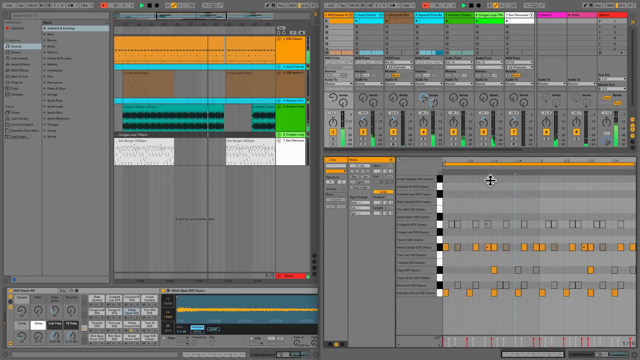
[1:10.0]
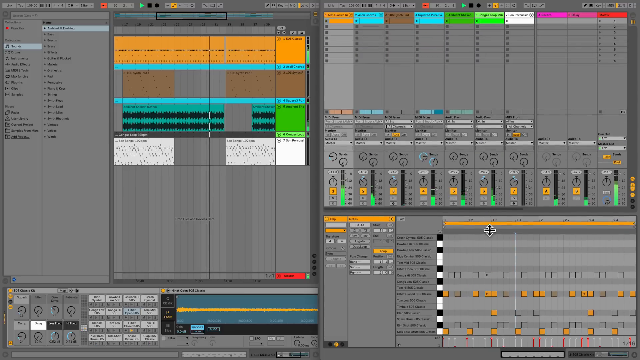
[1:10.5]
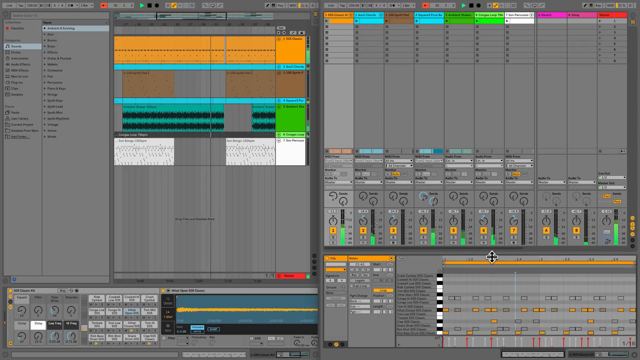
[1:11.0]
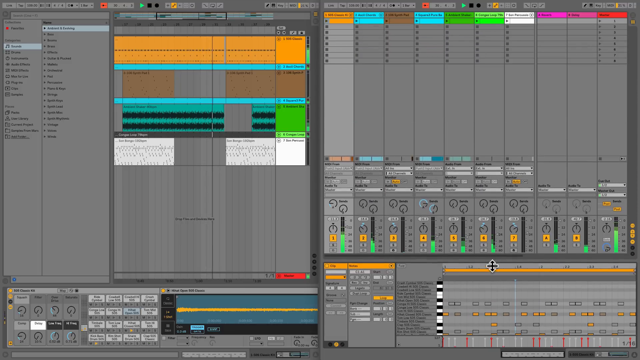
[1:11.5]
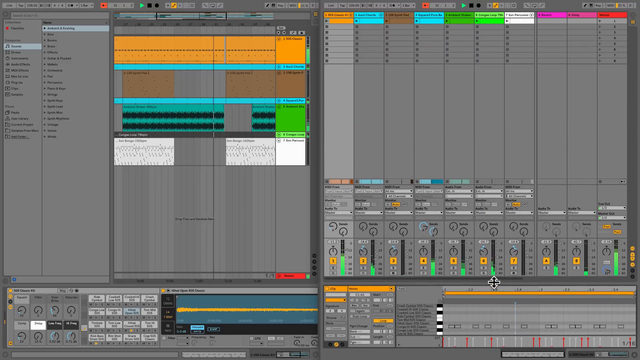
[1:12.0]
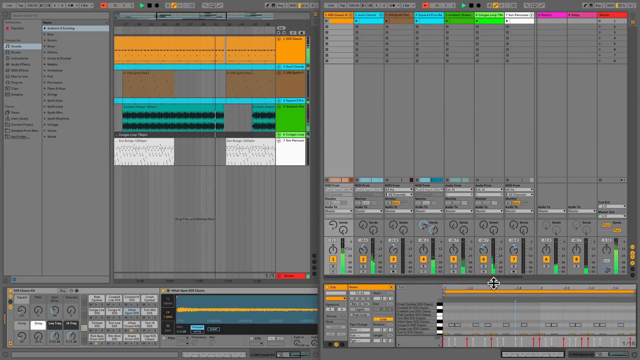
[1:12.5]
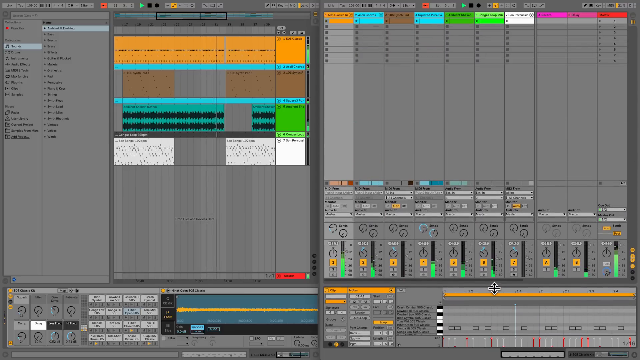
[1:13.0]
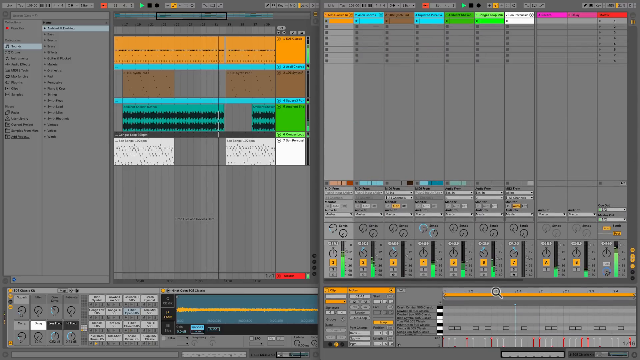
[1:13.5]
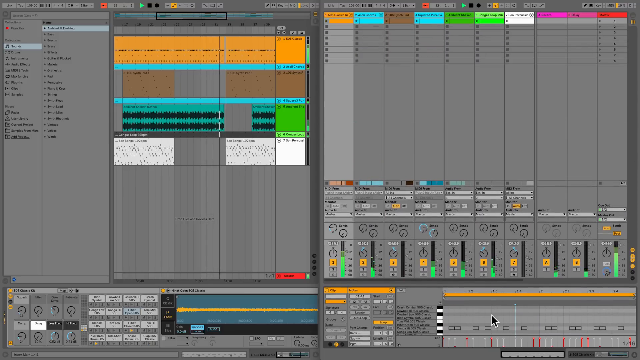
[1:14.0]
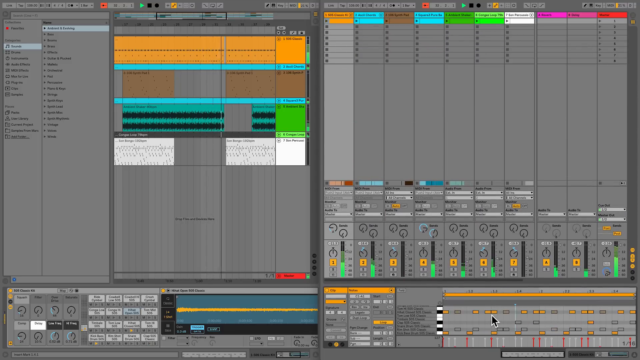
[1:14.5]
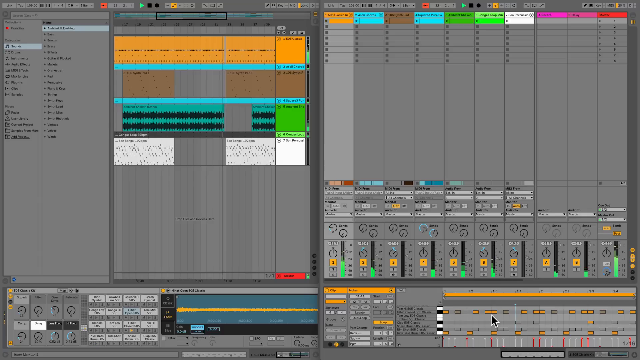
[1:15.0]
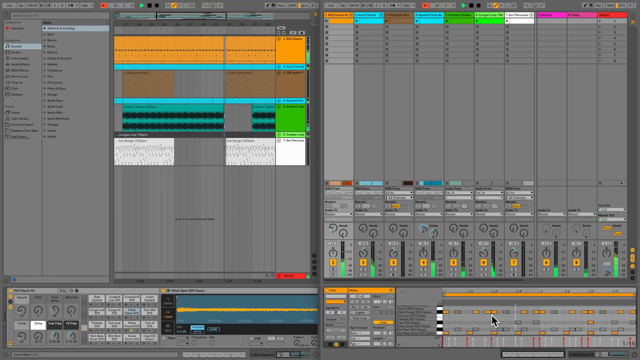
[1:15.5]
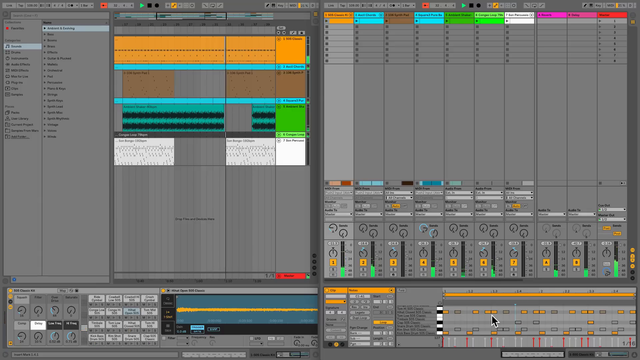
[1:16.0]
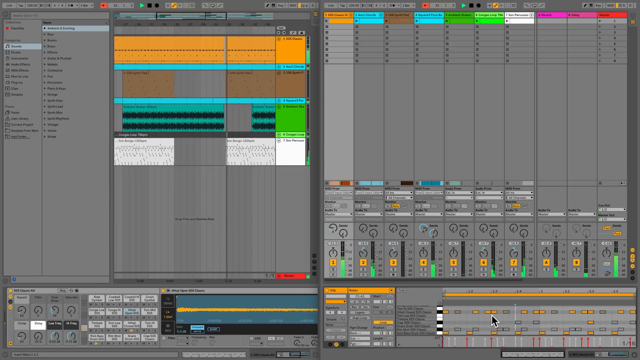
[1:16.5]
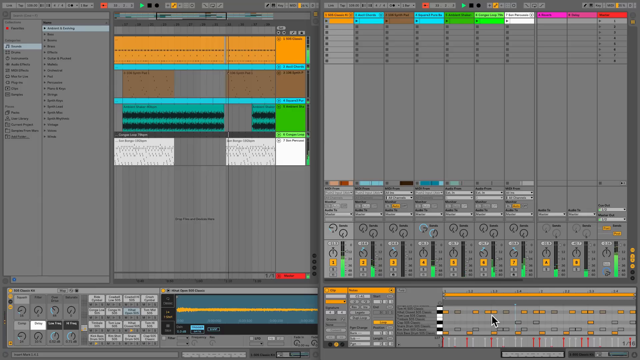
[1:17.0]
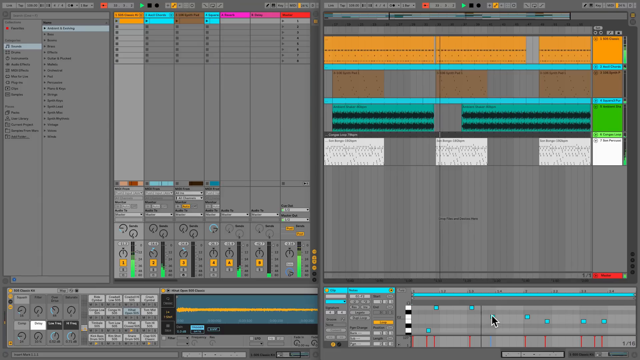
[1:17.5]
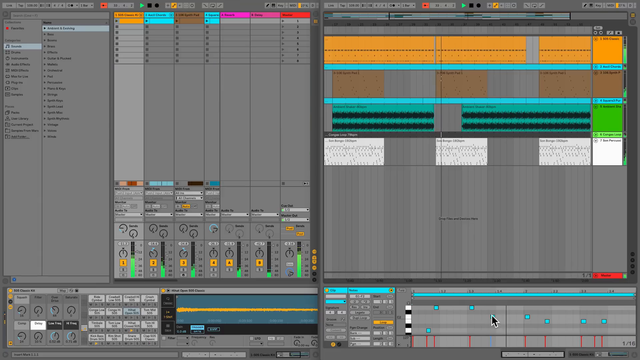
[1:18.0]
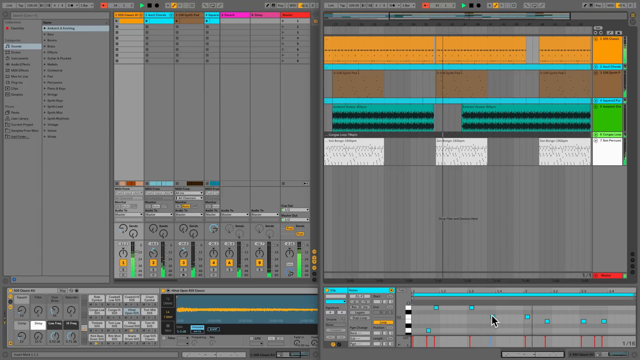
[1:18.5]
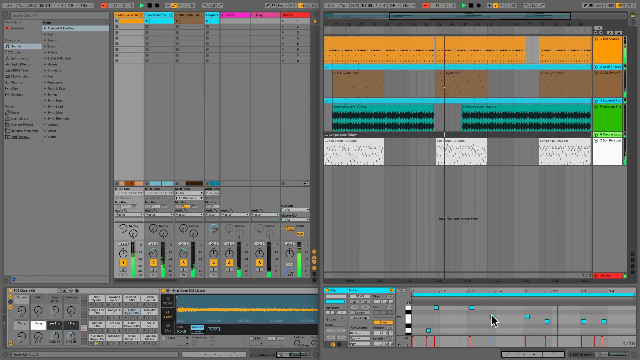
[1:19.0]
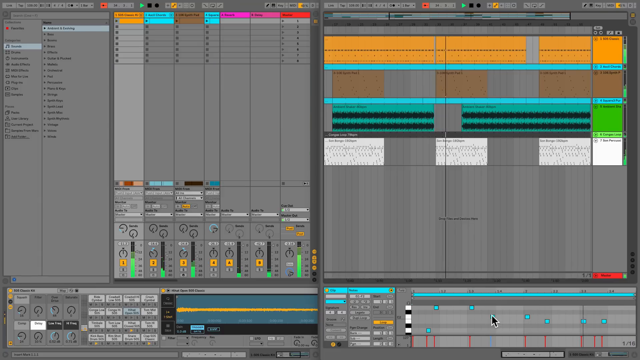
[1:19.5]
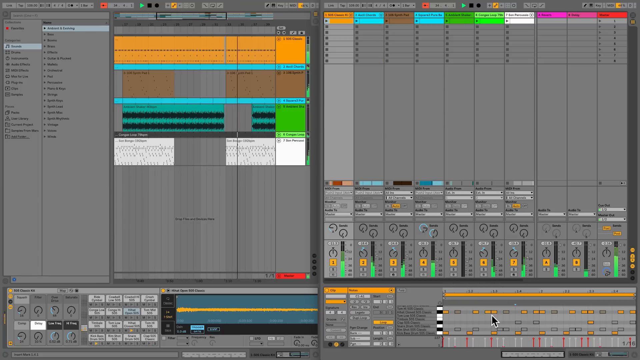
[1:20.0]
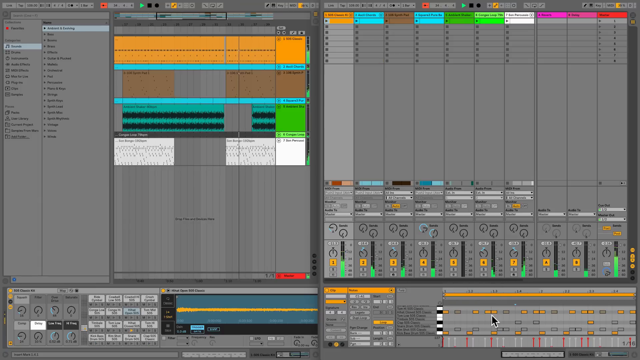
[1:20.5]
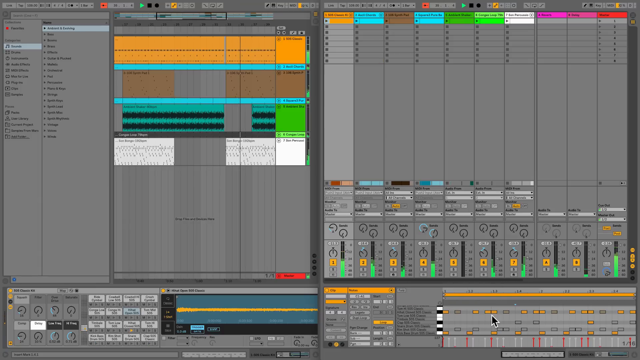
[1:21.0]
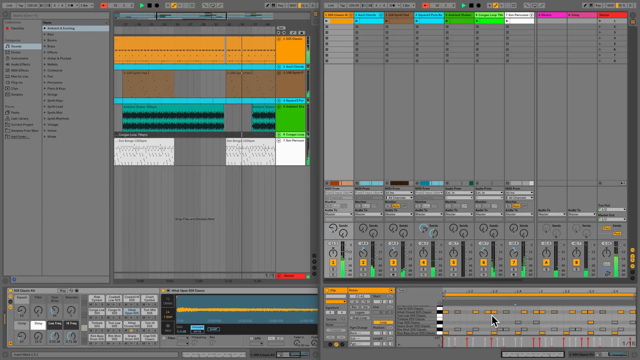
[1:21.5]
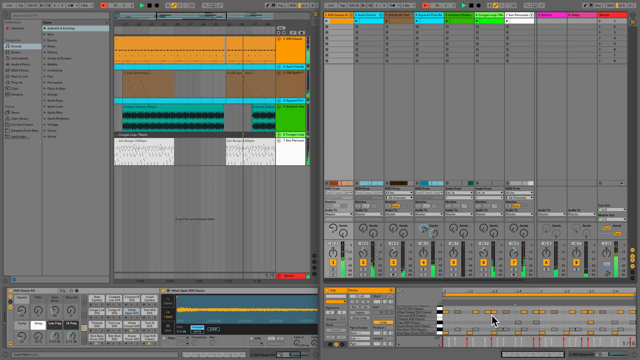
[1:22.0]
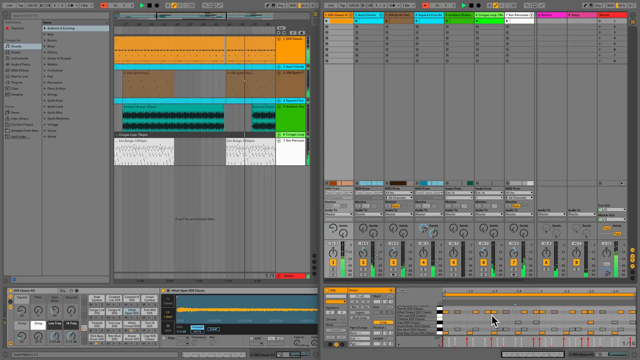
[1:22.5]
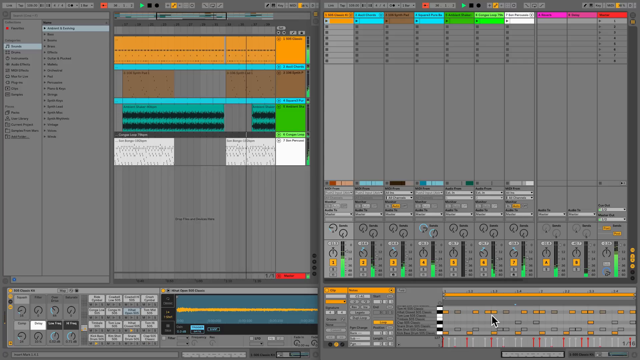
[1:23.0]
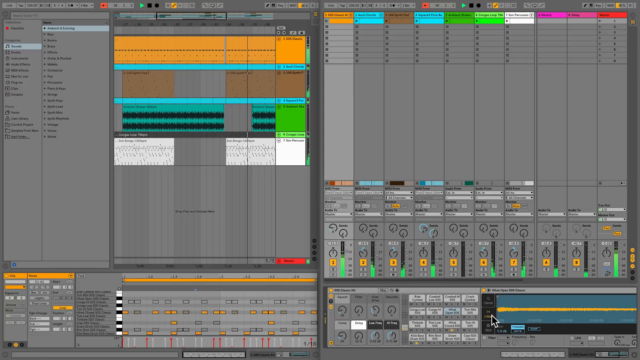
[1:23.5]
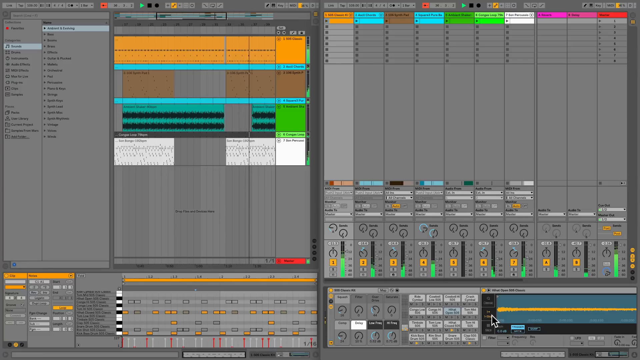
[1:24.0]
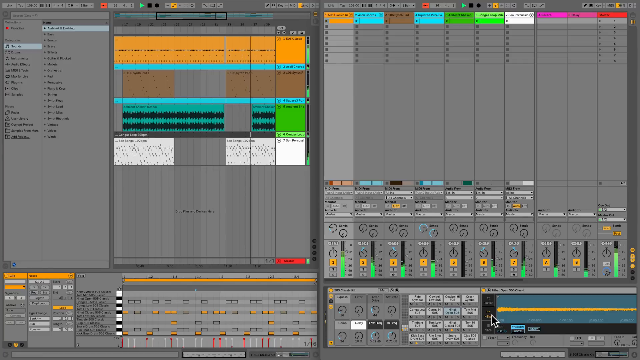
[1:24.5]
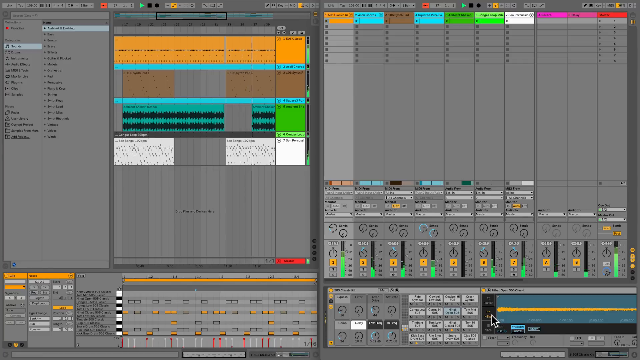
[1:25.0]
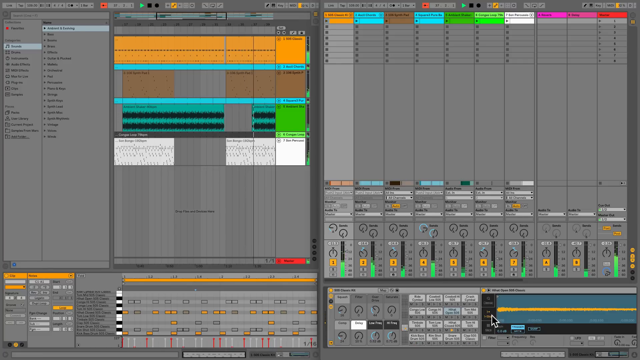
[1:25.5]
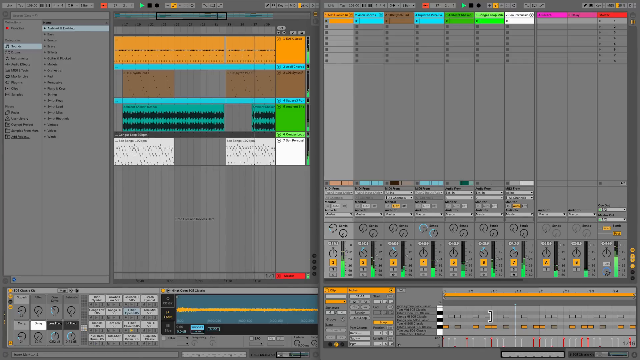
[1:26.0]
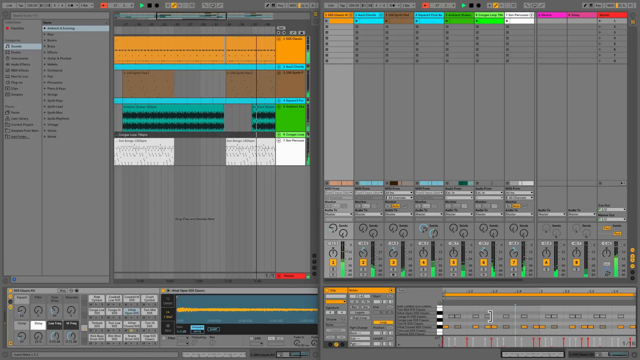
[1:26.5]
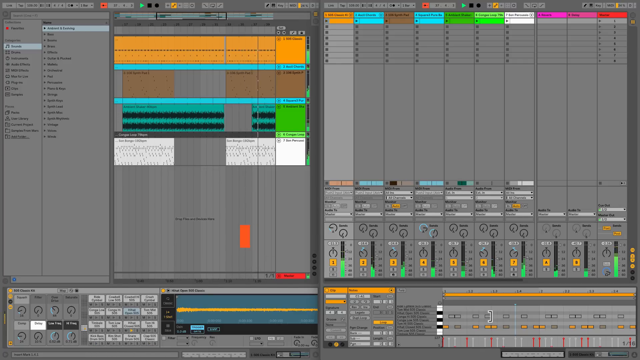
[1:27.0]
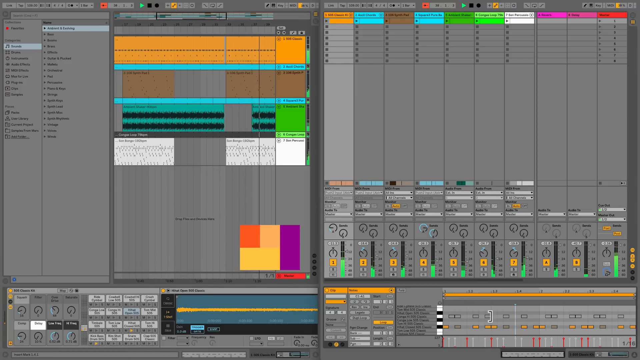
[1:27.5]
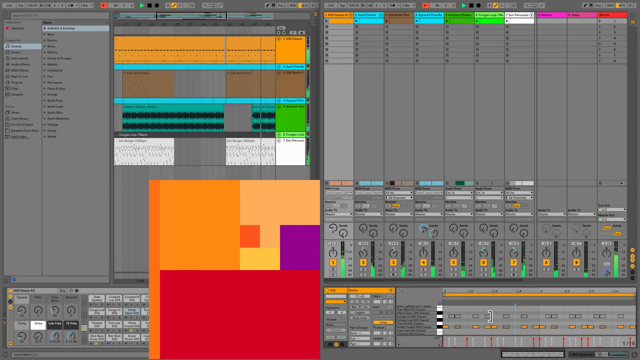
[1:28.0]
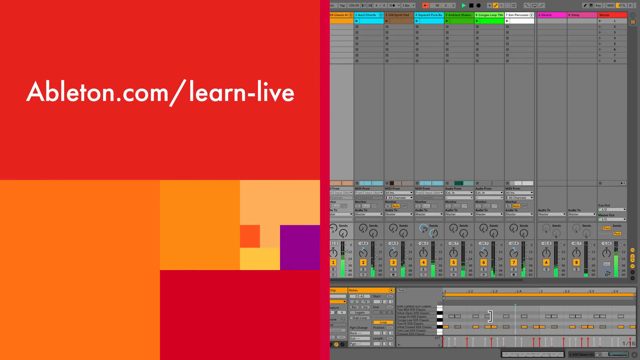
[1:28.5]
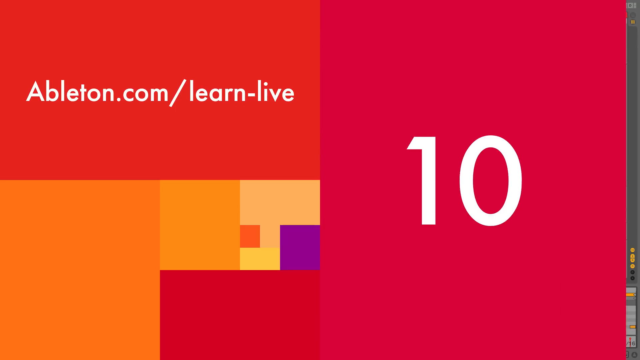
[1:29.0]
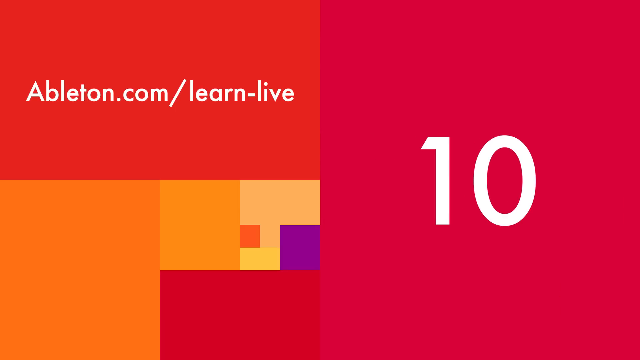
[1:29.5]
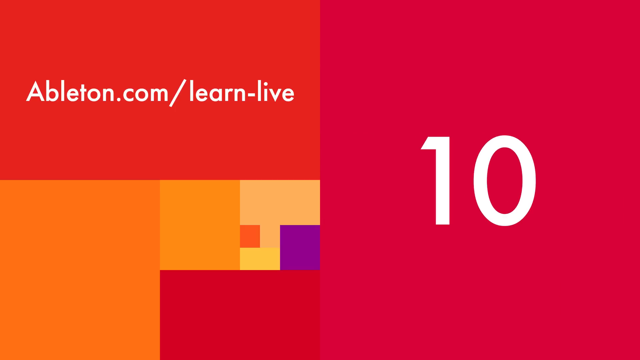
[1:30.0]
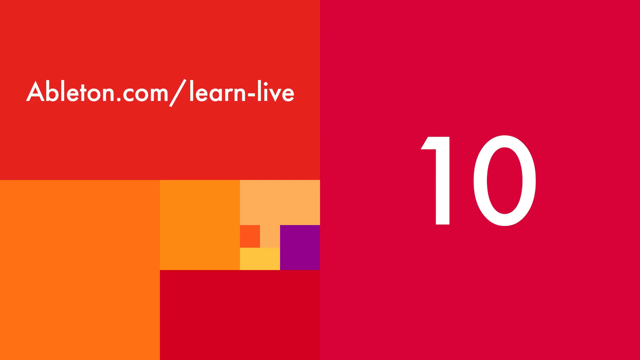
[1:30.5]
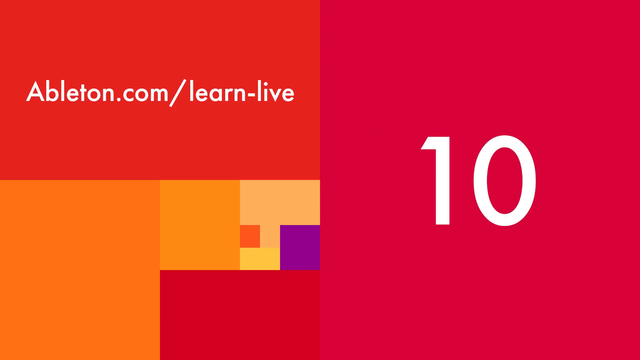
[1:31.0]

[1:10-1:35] A split screen keeps the main focus on the right side, where fluorescent green bars move up and down as the sound apparently changes. Along the bottom of the screen, another pattern of movement plays out with black squiggle lines. Then the screen is kind of painted over, almost, with a red color that makes it disappear, and a completely red screen appears. On the right side of the red screen is the number 10, and on the left it says "ableton.com/learn-live". Below that, in the middle of the red screen, a big orange box, a smaller orange box connected to its top, and yellow, purple and darker orange boxes are connected to form a different shape.